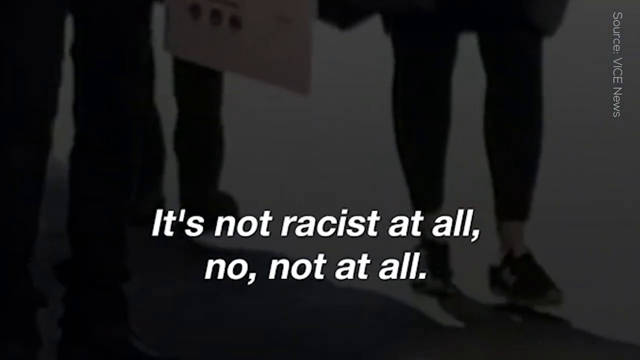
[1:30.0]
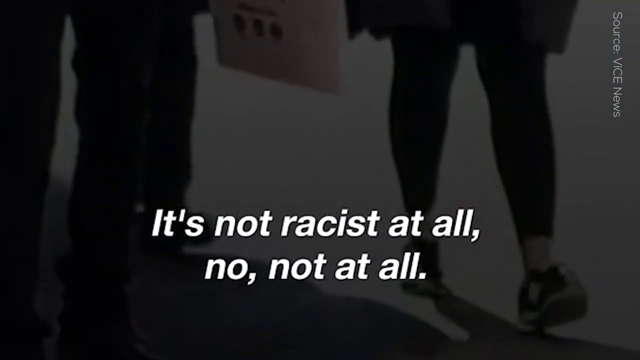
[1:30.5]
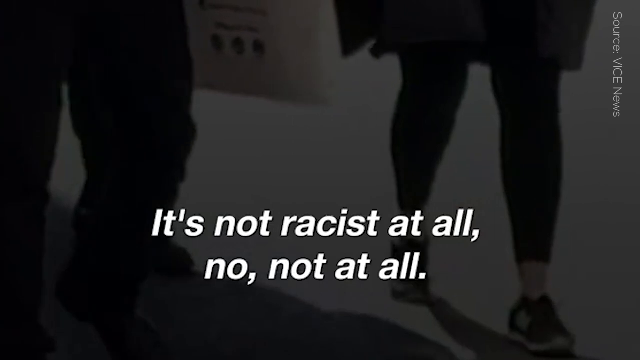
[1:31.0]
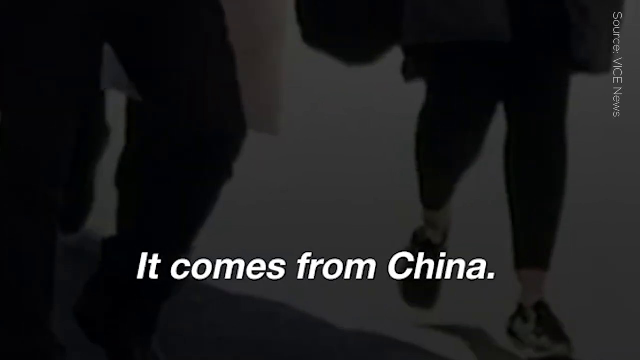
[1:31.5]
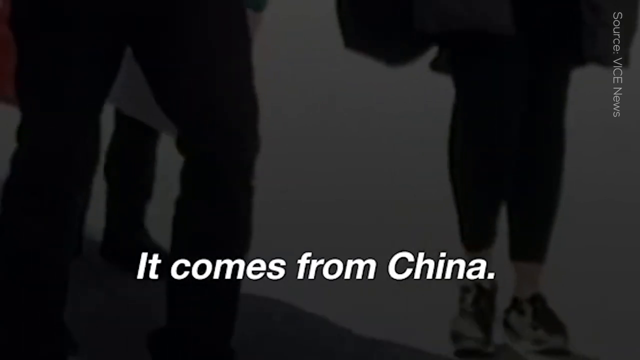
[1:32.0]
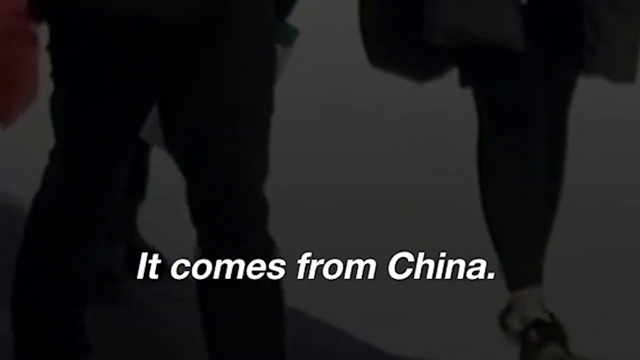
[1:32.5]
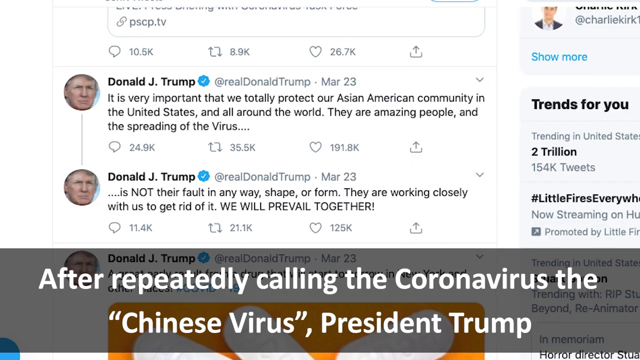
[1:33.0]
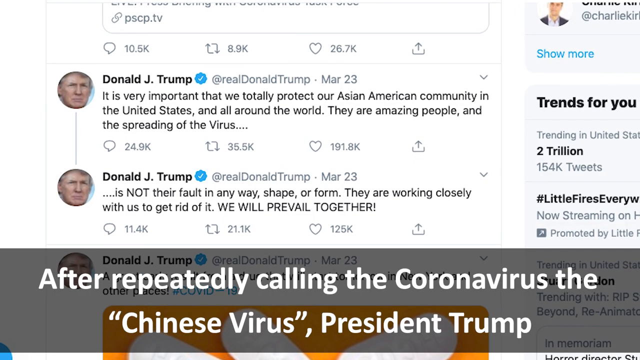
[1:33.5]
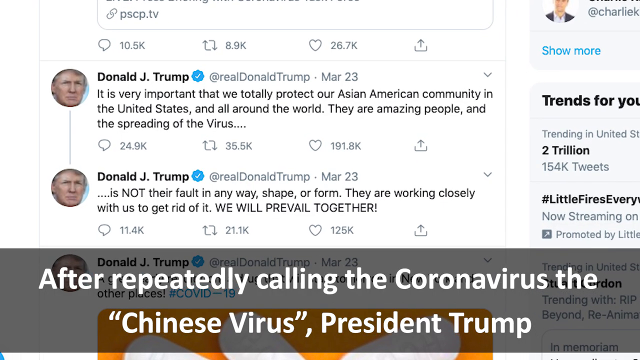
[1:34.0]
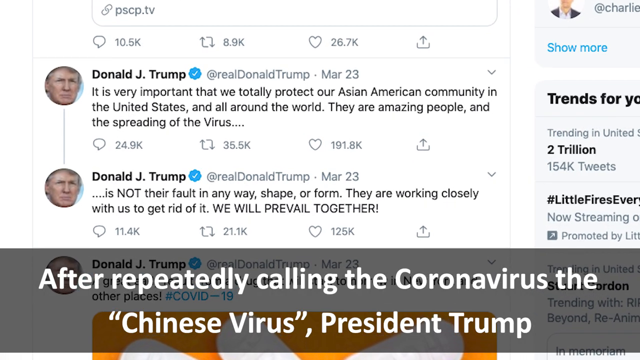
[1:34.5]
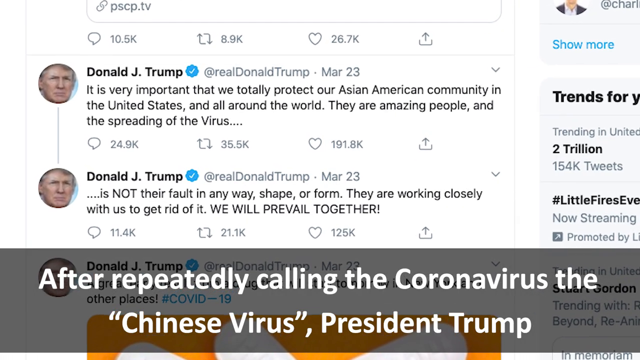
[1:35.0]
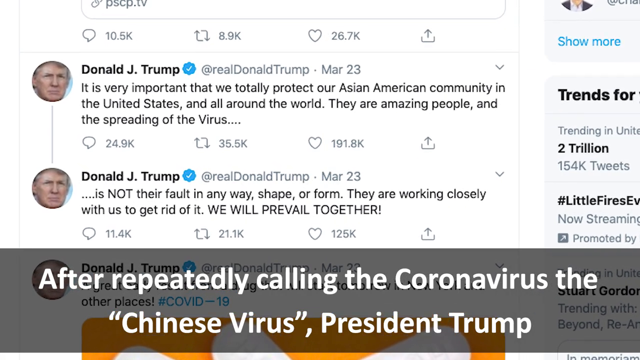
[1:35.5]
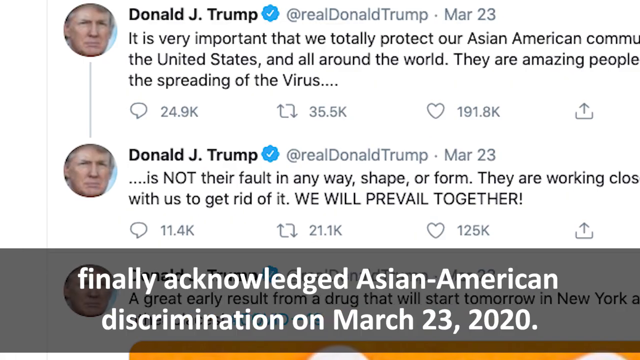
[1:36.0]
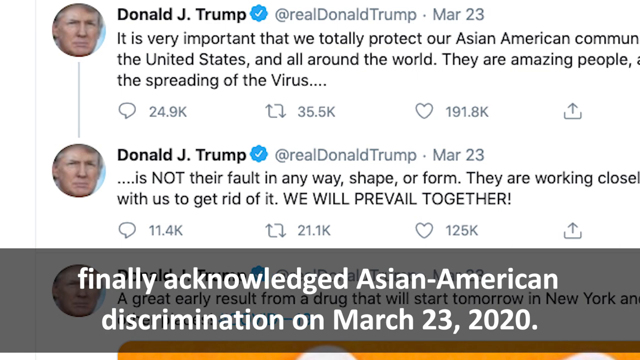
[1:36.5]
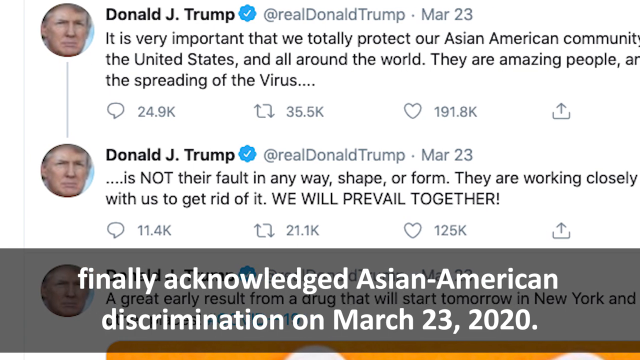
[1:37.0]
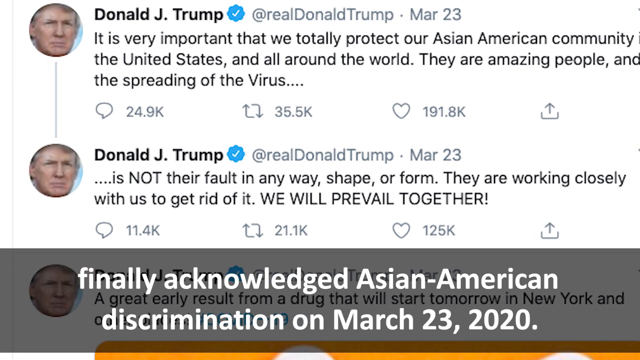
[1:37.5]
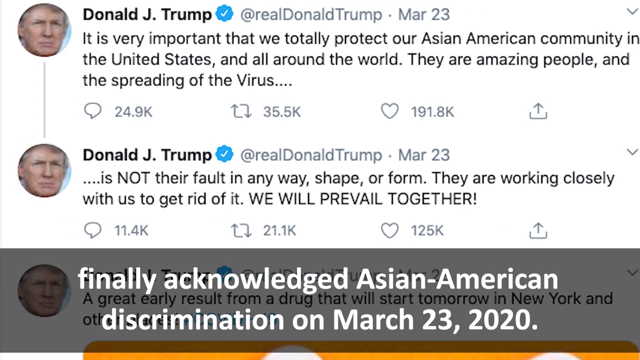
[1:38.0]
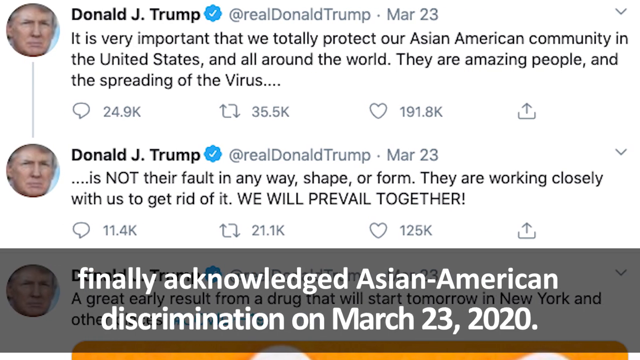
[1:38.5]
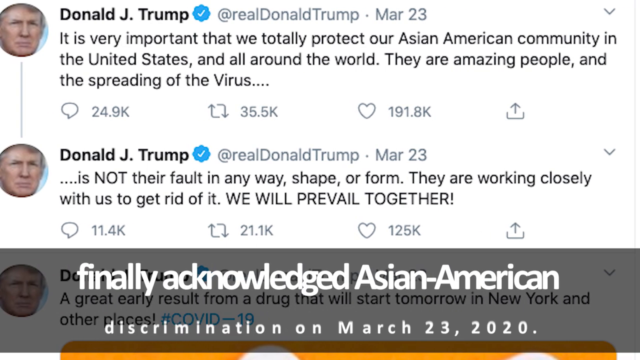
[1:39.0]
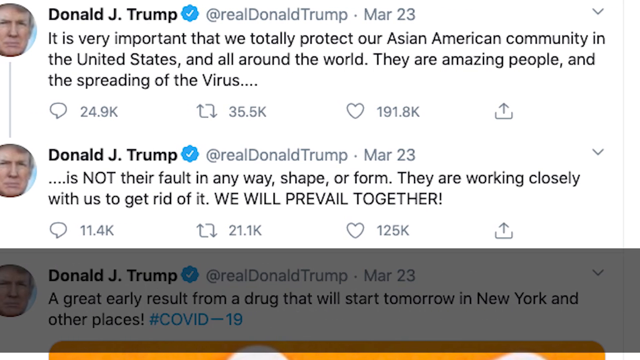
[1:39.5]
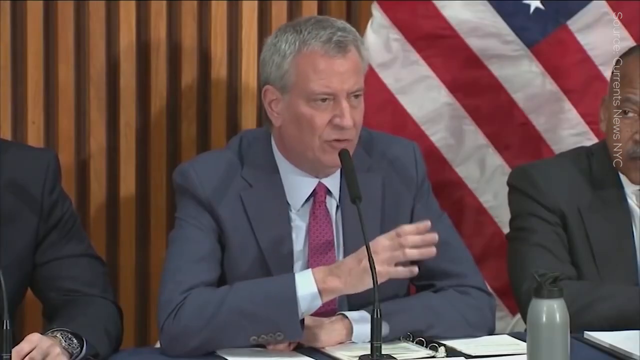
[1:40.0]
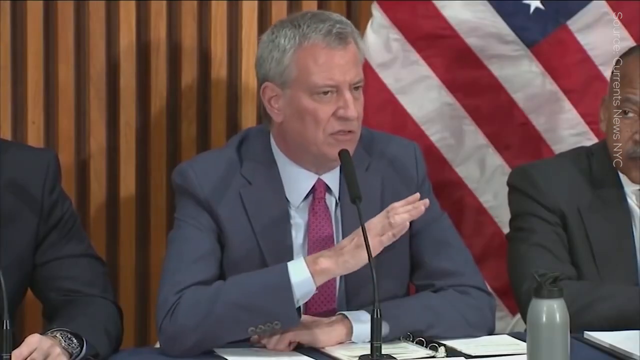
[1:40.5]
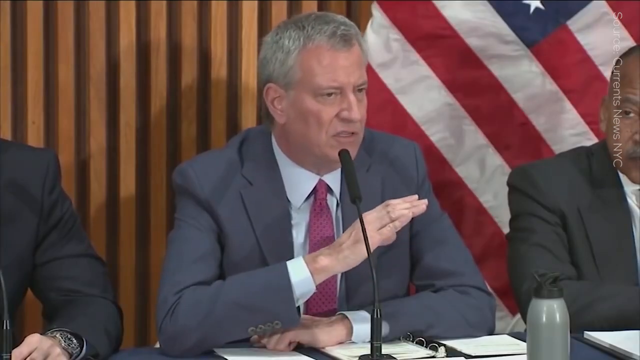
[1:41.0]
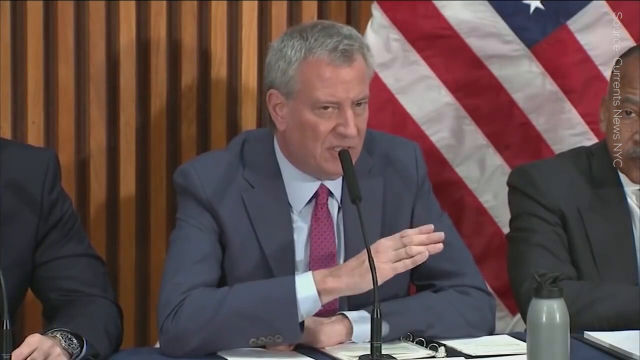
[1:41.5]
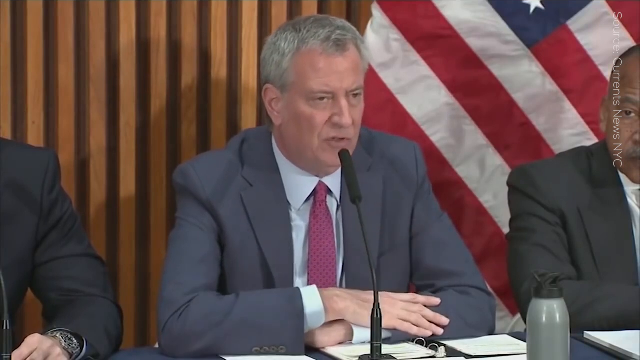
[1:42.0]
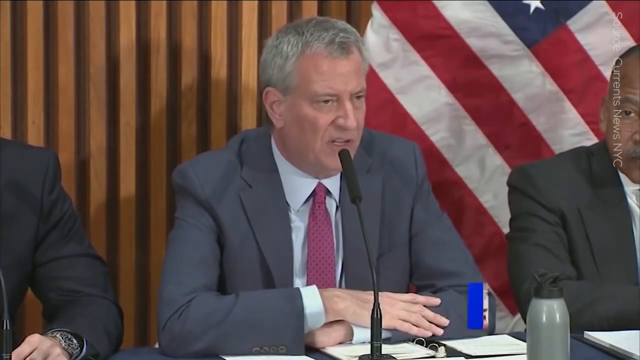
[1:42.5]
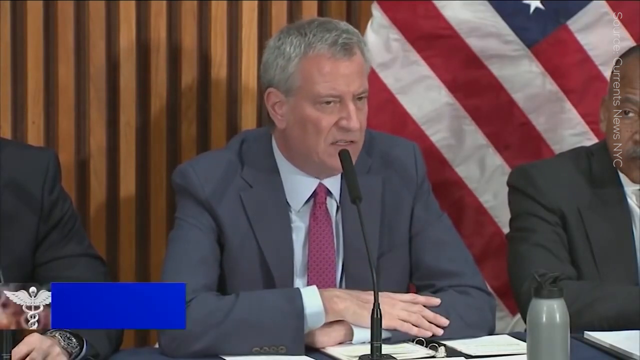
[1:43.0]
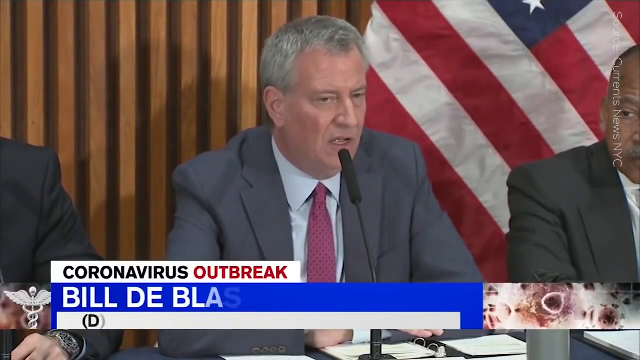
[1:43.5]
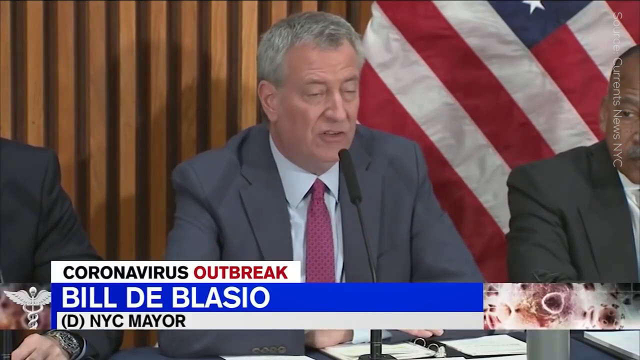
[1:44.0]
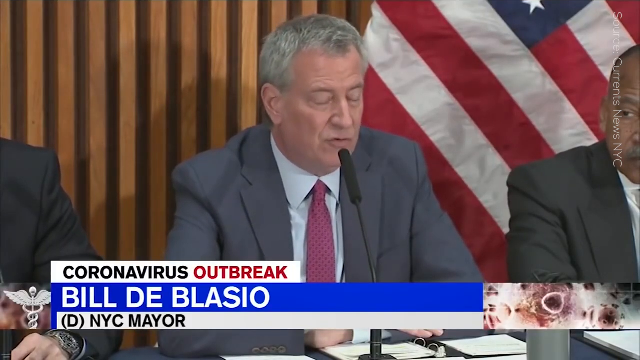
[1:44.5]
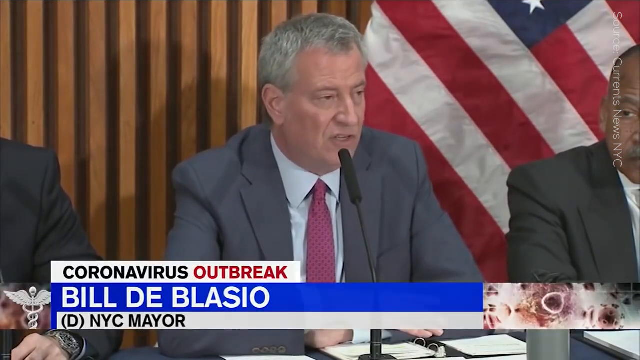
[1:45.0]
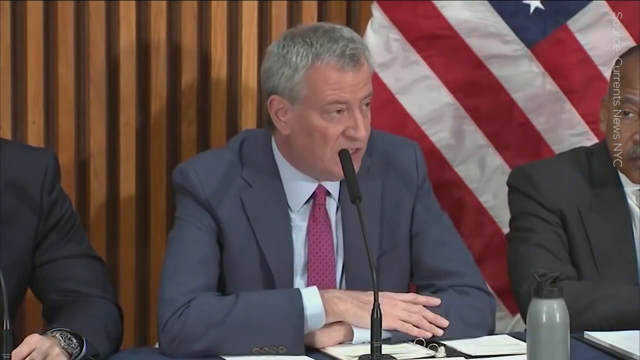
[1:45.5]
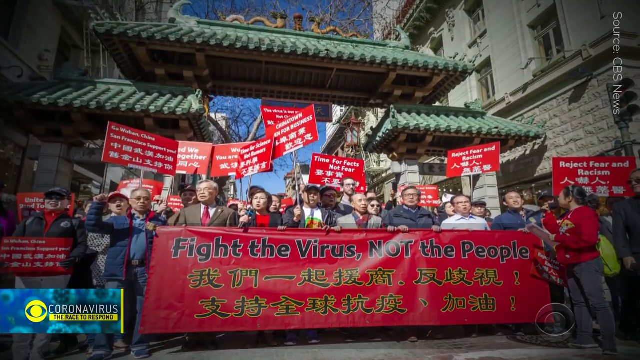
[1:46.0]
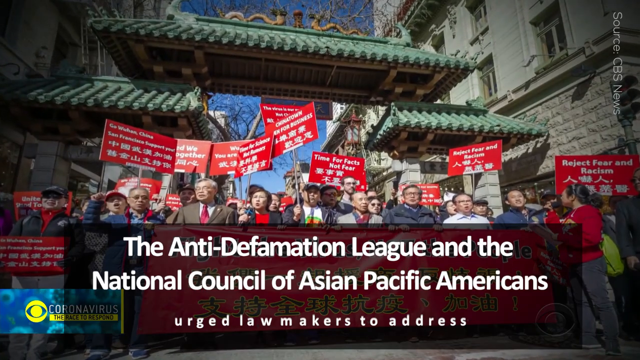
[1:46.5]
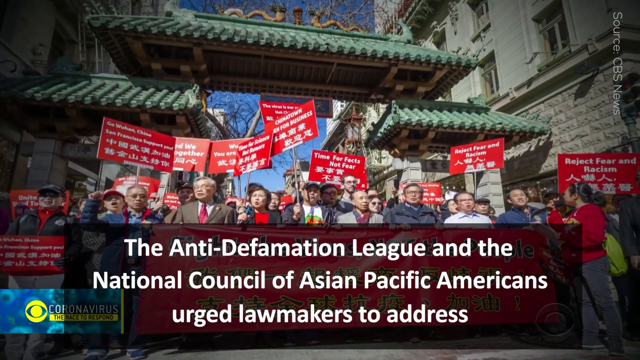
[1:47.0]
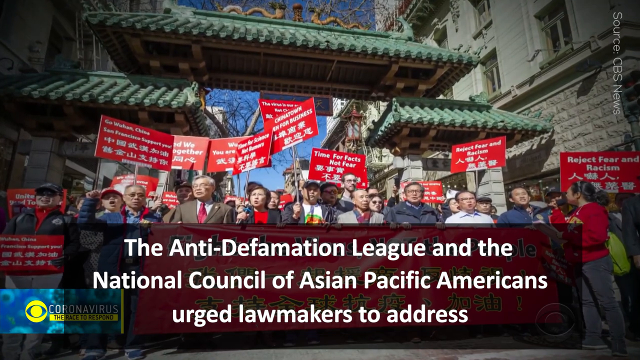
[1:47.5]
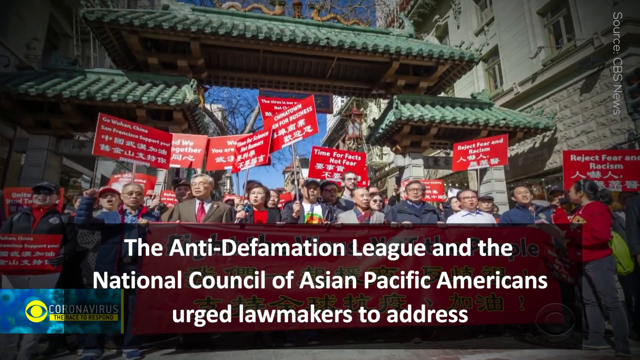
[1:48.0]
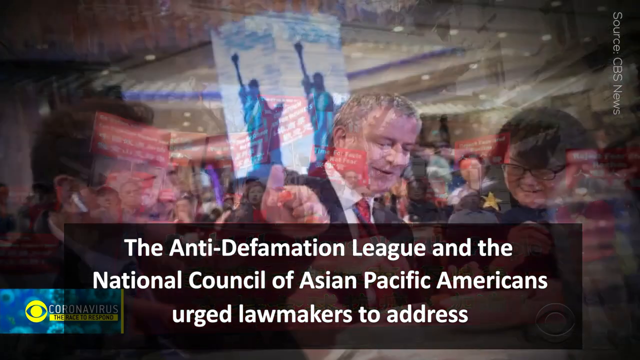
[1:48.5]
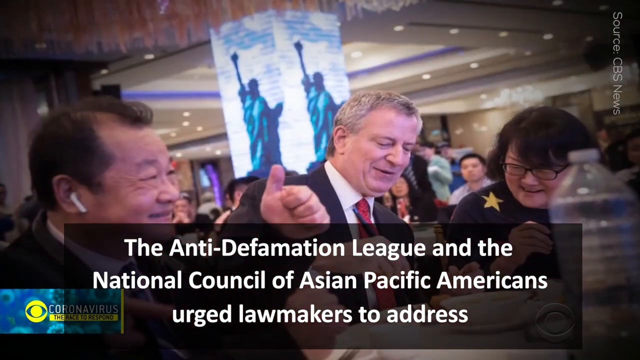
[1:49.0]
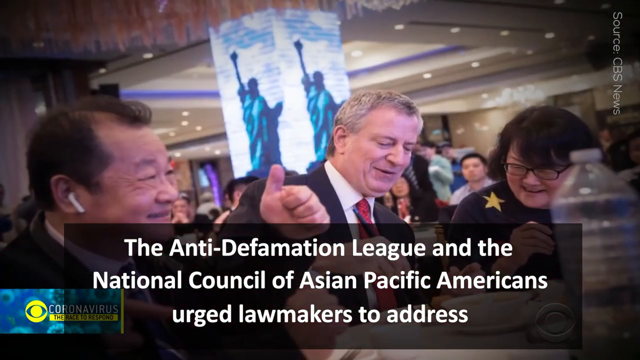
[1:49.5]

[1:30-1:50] Text reading "it comes from china" appears over footage of people moving. Tweets by Donald J. Trump are shown, one with more than 24.9K comments and 125K likes, including the words "we will prevail together." On the left, "two trillion" appears. A March 23, 2020 item shows that Donald Trump has acknowledged Asian American discrimination and does not stand with it. The screen flips to Bill de Blasio presenting something. Text about the Anti-Defamation League and the National Council of Asian Pacific Americans calling on lawmakers to address the situation appears, and people march holding boards about the discrimination that East Asians and Asian Americans are going through.